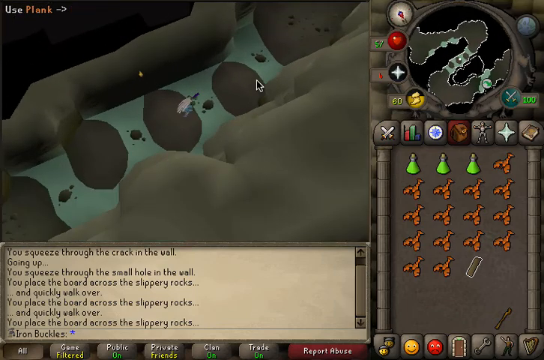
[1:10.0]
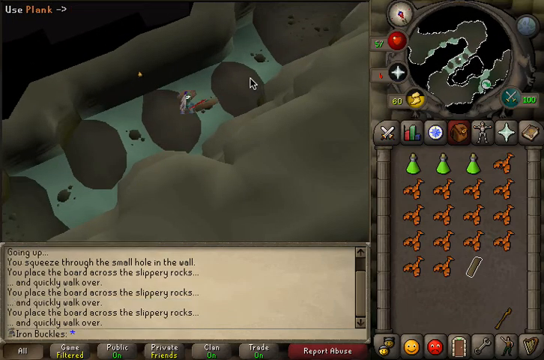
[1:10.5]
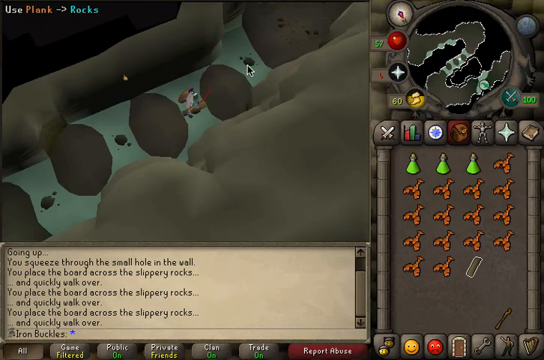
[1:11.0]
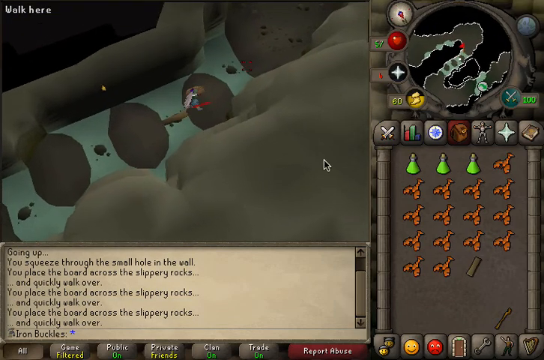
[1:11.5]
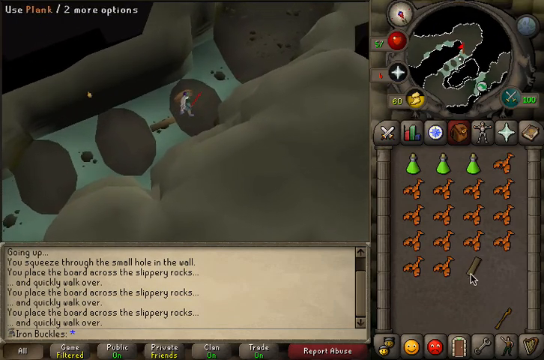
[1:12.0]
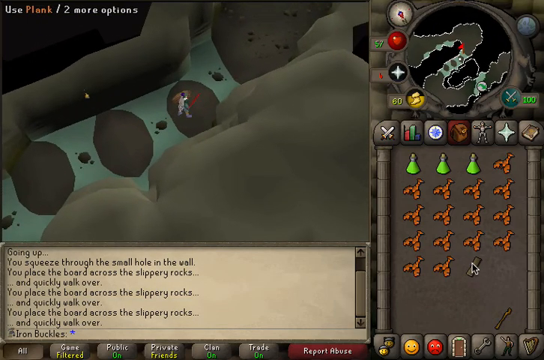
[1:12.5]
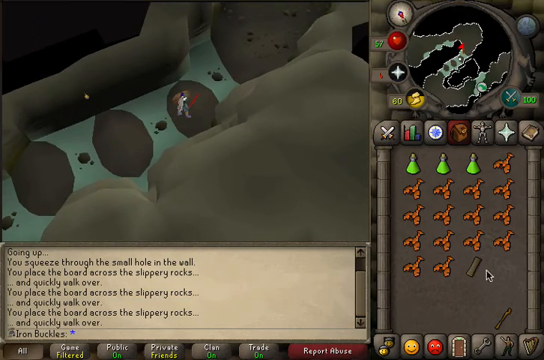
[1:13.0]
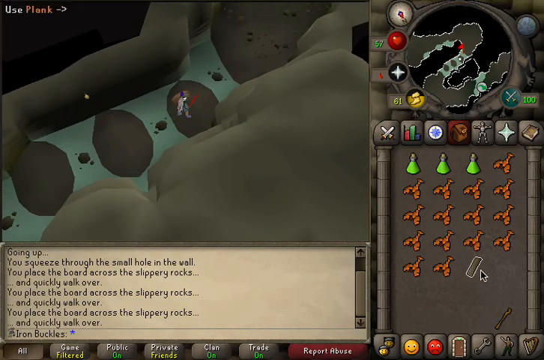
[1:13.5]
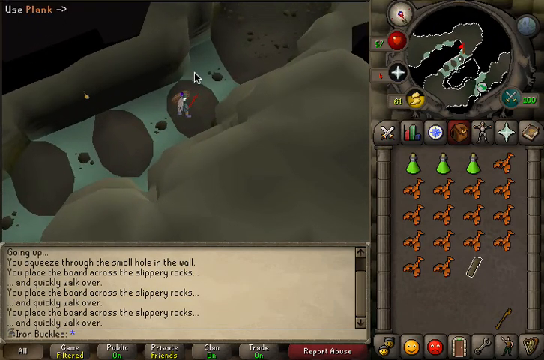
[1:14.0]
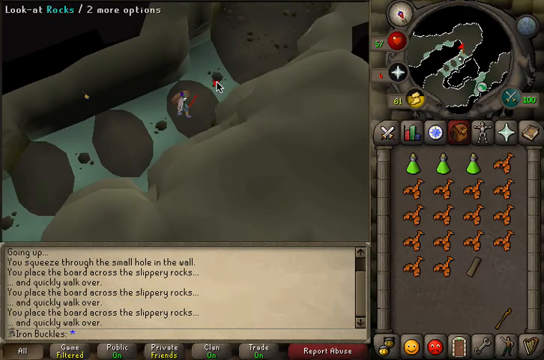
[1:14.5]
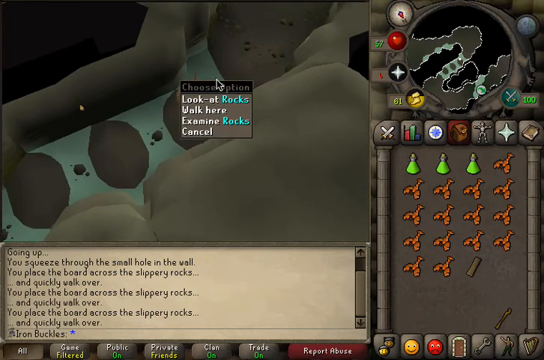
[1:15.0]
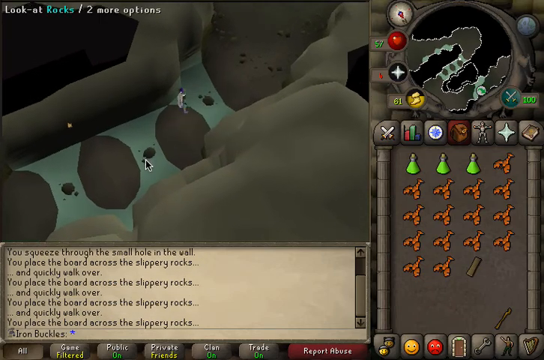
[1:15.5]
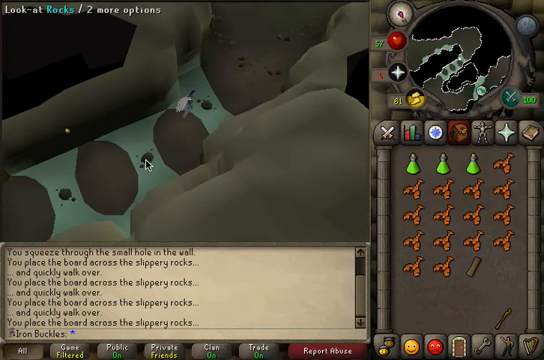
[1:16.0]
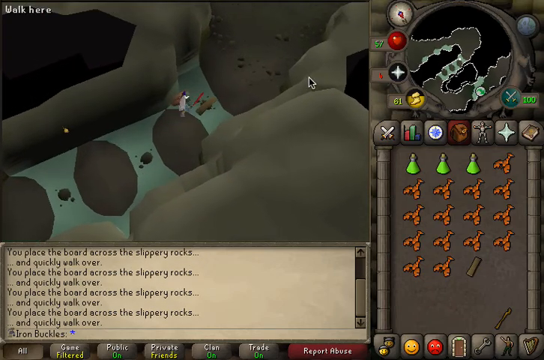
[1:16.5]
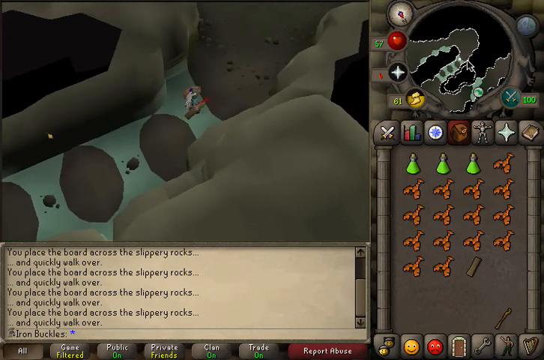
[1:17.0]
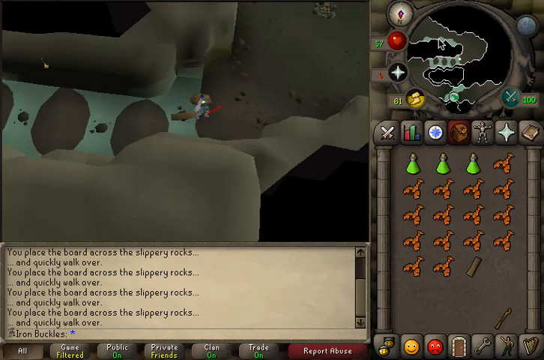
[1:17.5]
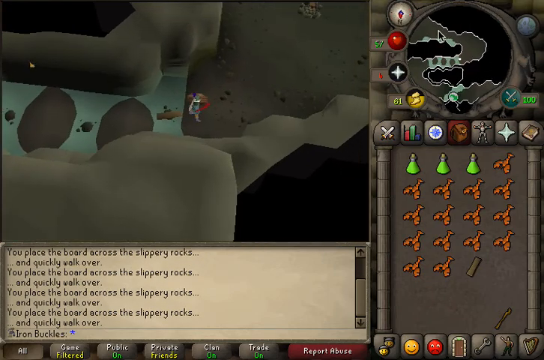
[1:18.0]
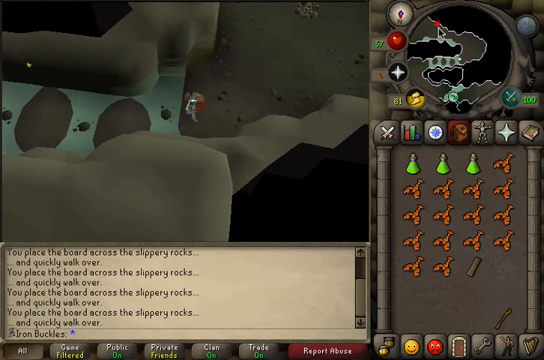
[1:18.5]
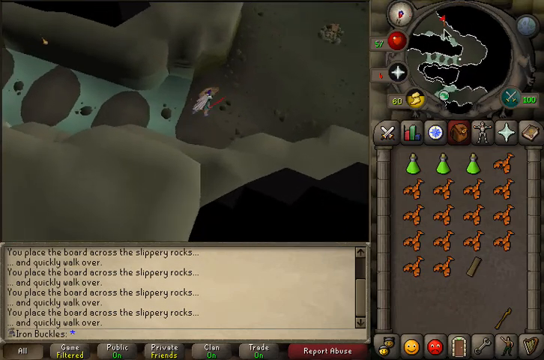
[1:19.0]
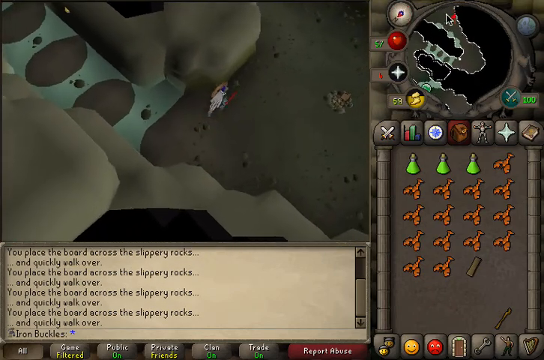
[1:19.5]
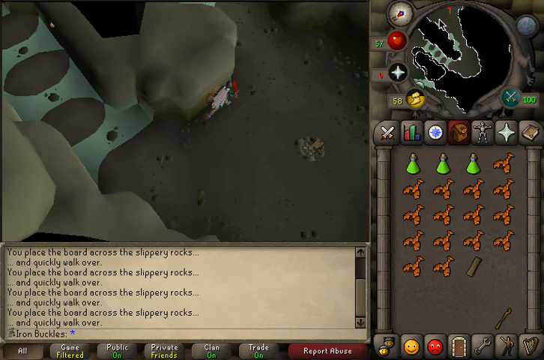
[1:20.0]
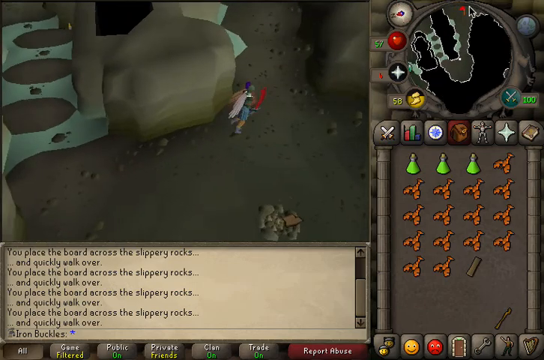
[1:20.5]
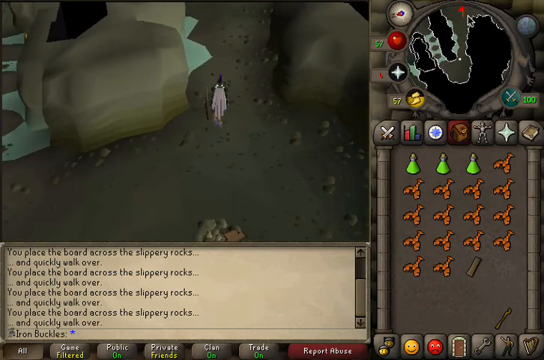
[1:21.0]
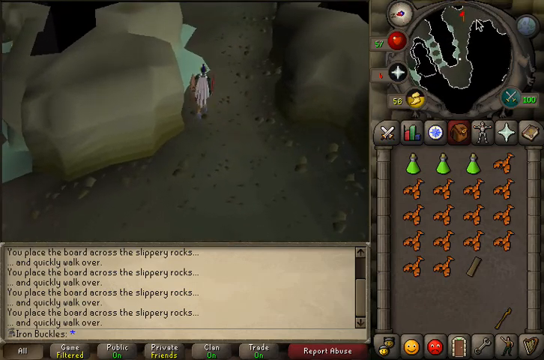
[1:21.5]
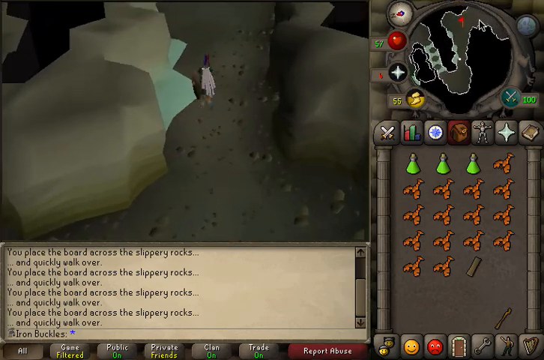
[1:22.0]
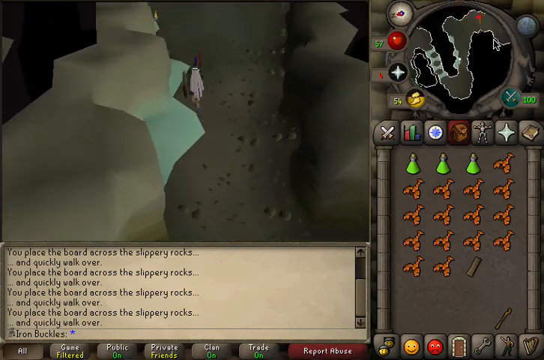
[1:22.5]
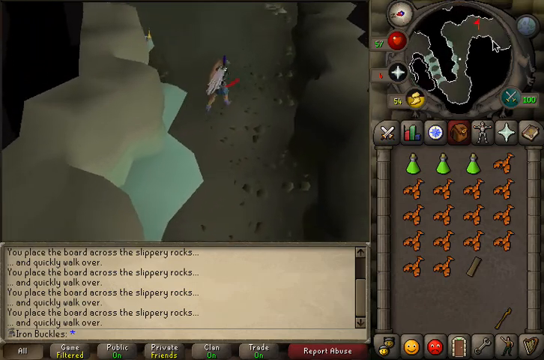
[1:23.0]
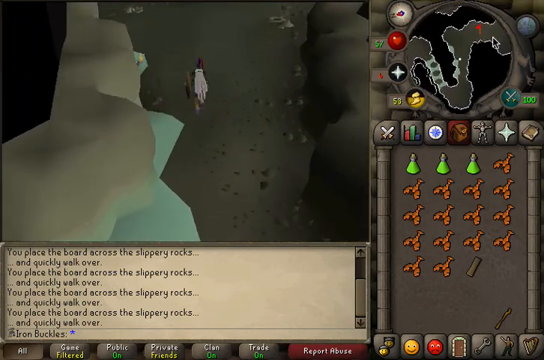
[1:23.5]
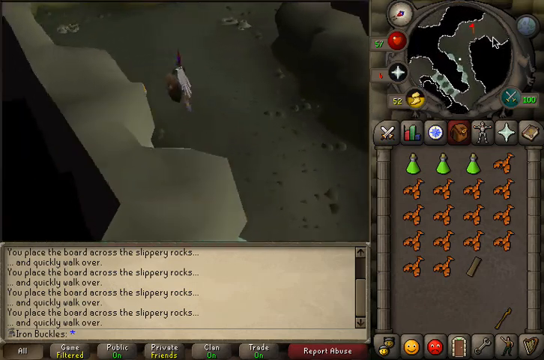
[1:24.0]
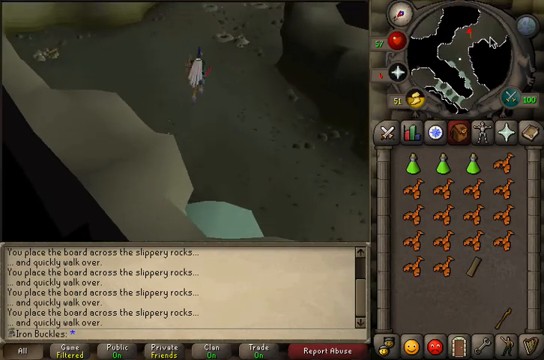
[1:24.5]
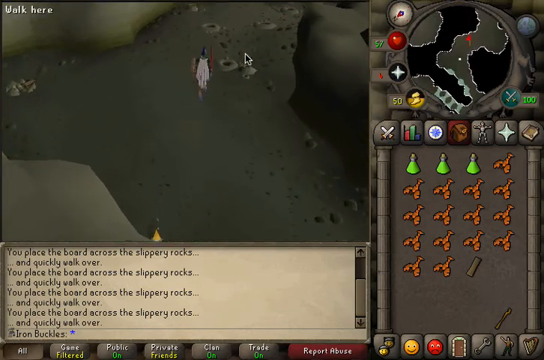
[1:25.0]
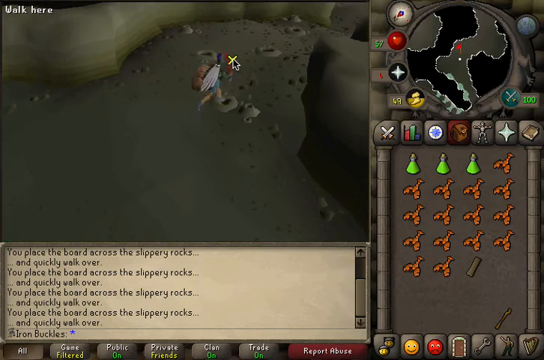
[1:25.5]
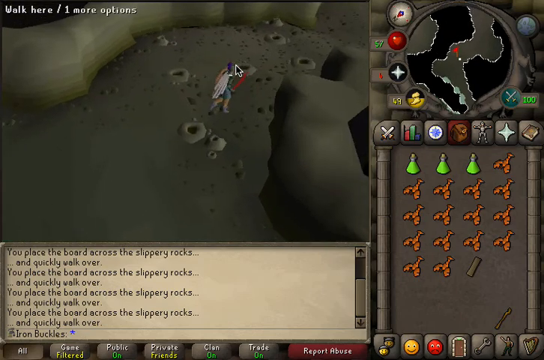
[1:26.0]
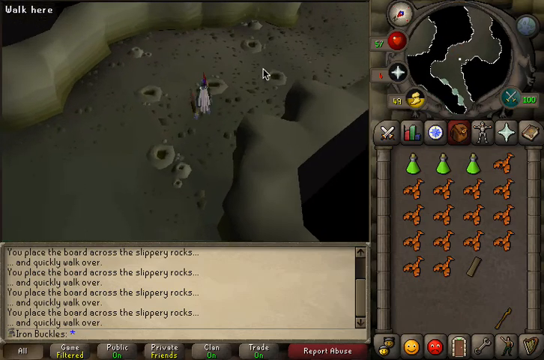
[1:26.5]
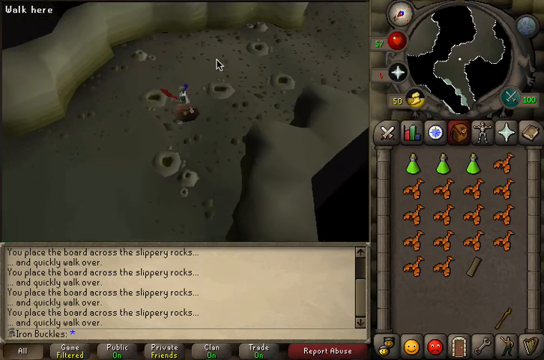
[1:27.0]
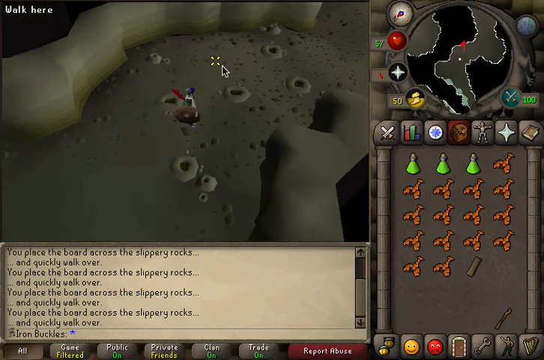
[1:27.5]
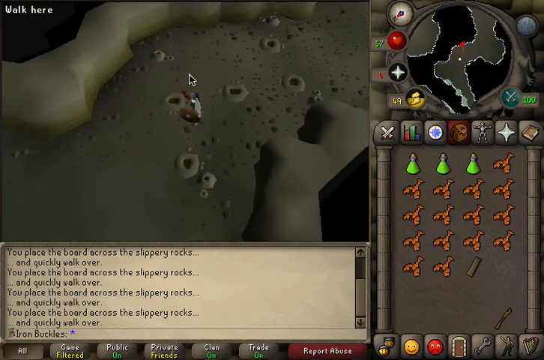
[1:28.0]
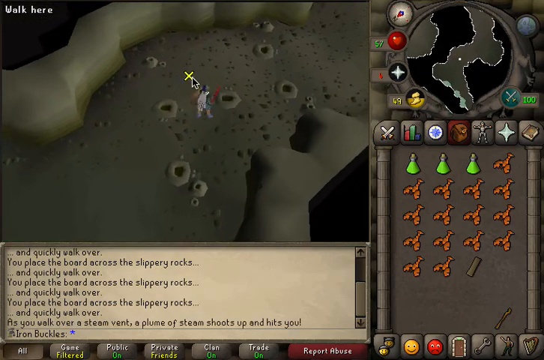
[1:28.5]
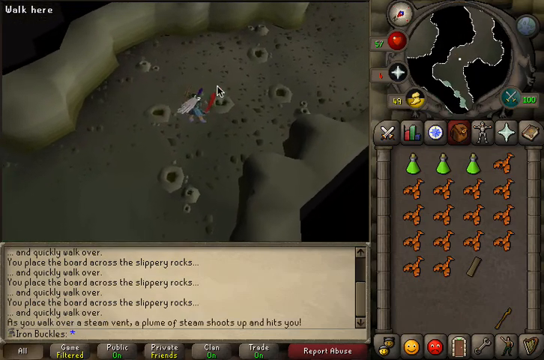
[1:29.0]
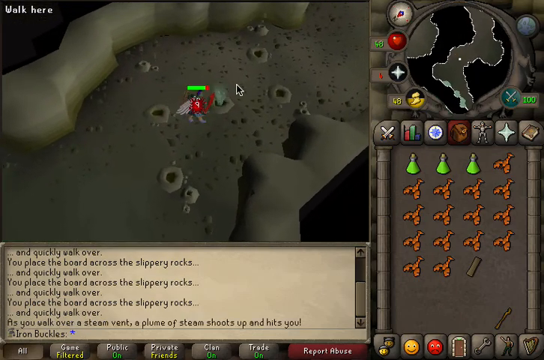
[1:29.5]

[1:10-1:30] The game seems to be computer-based, with the mouse clicking various items and the HUD popping up information, and it seems older-school. In the upper left-hand corner it says "walk here." As the mouse moves around, it highlights different parts of the HUD map in the upper right-hand corner. The boot icon, which was gold, seems no longer gold, and the number 54 is next to it, possibly a stamina meter going down, while the two swords still show 100. There are some holes that seem to be in the ground; the character seemingly looks down at them, and what looks like some type of air pours out, possibly hot air. The character continues deeper into the cave, where there seems to be more area to explore.